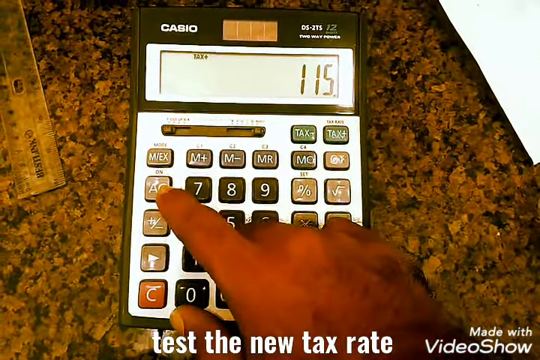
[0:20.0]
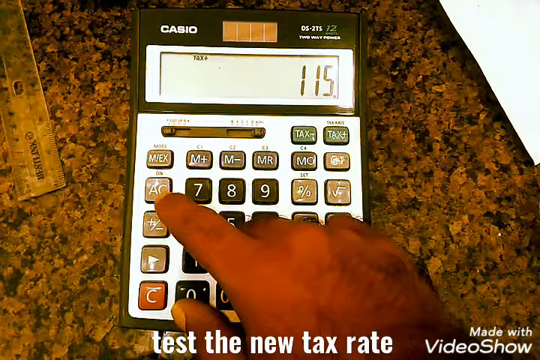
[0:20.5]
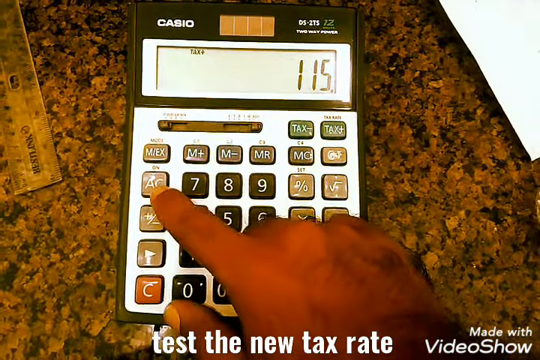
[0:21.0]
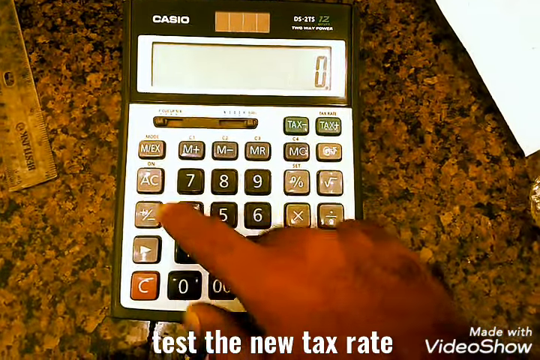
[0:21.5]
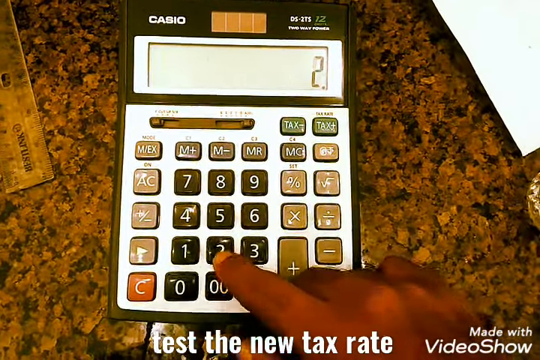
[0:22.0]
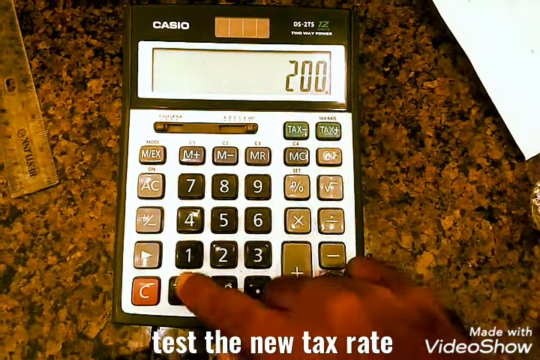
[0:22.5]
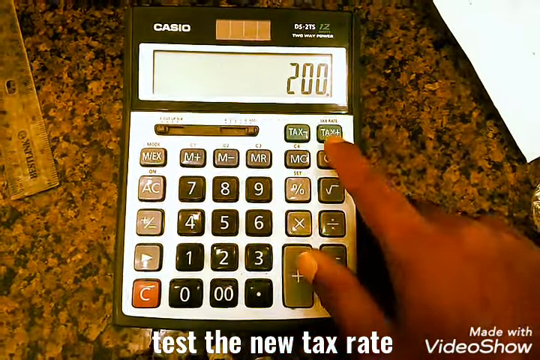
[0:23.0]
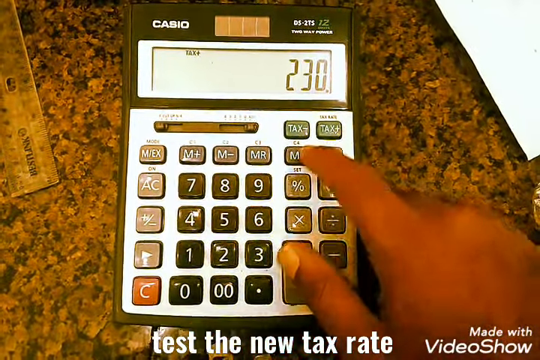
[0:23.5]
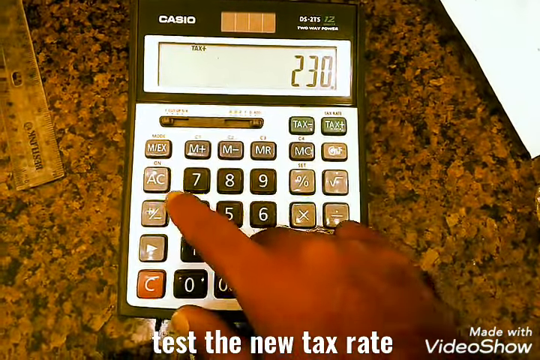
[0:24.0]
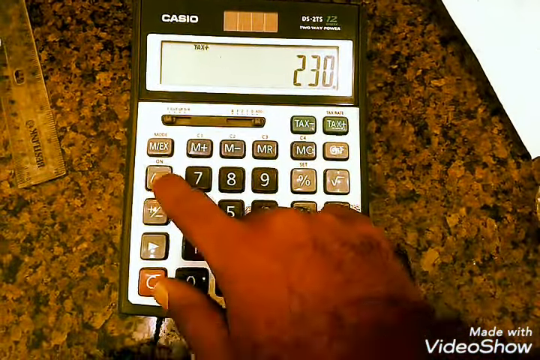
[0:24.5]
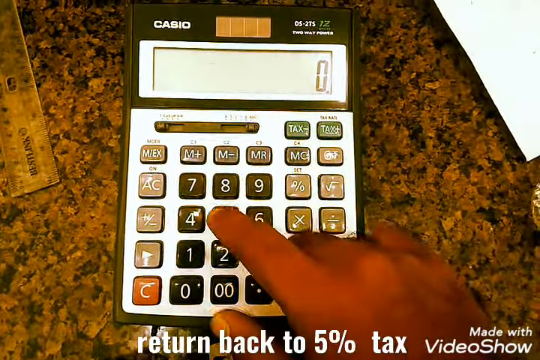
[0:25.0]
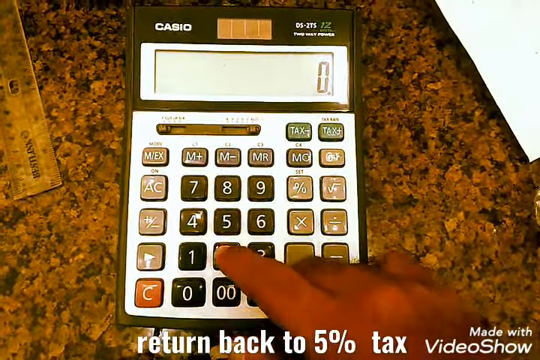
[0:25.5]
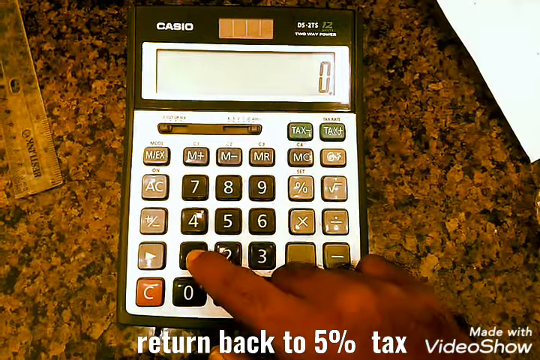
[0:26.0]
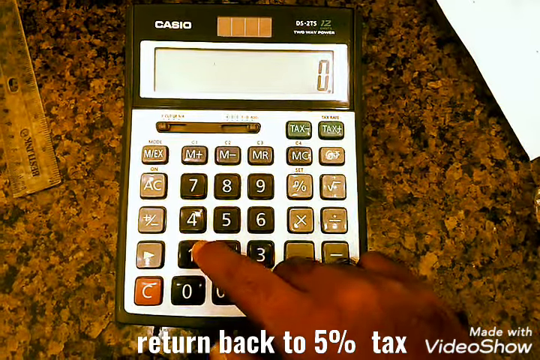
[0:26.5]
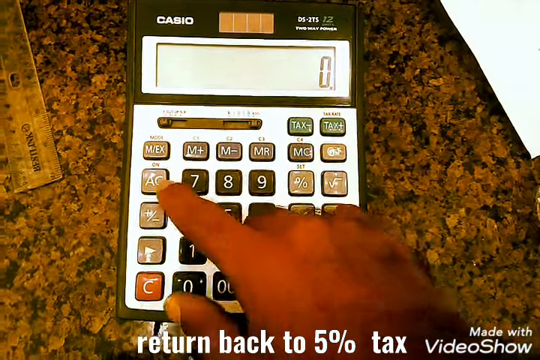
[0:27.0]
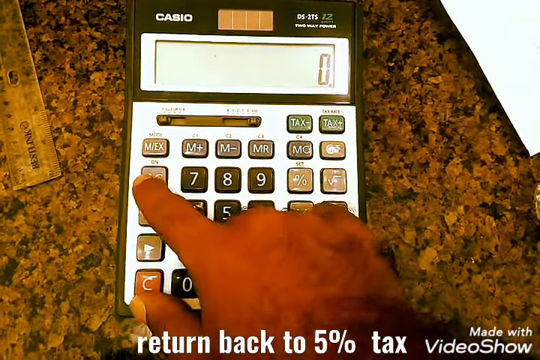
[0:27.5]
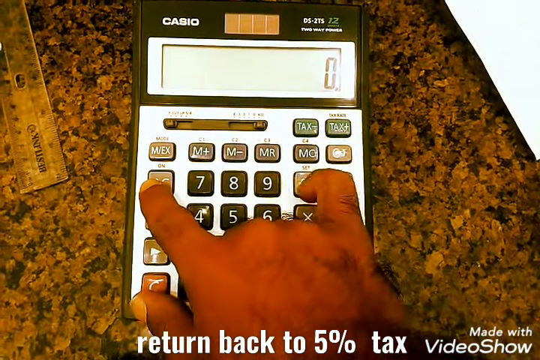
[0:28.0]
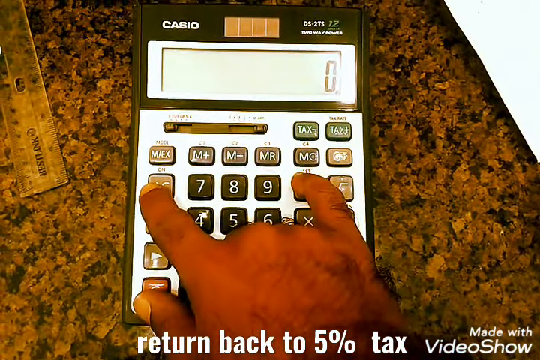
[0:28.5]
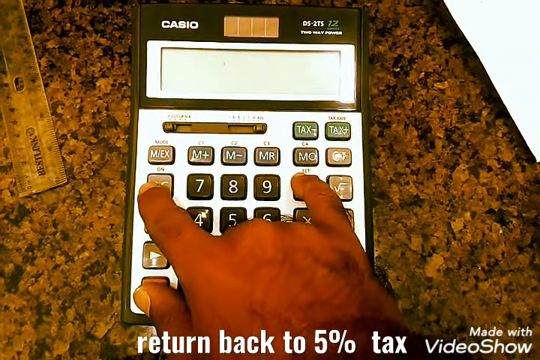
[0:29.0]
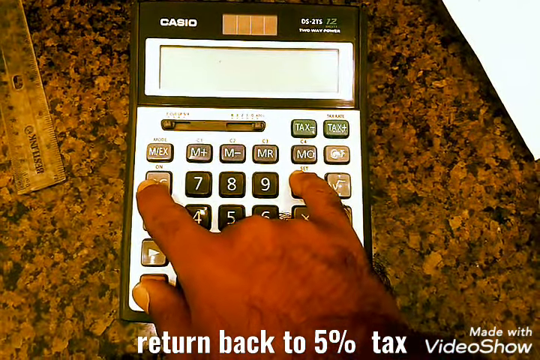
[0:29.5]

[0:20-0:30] A hand presses the AC key on a Casio calculator, with the number 115 on the display. Text at the bottom of the screen reads "test the new tax rate". The person keeps pressing buttons, then holds the AC and percentage keys, and 115 appears on the display. An indicator in the top left-hand corner of the display reads "tax". The calculator is solar-powered, with a rectangular four-panel solar box at the top next to the word "Casio", and the model "DS-2TS" is shown. The buttons are multicolored: dark brown, almost black, for the numbers, lighter brown for the function and memory keys, and an orange button with the letter C for clearing.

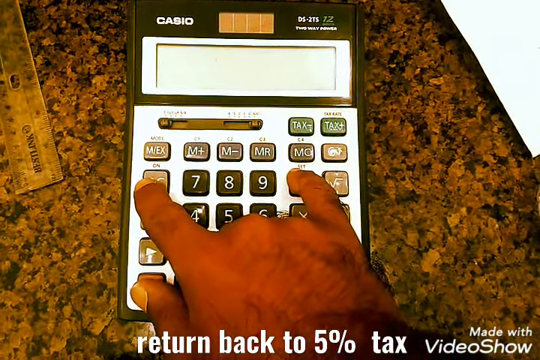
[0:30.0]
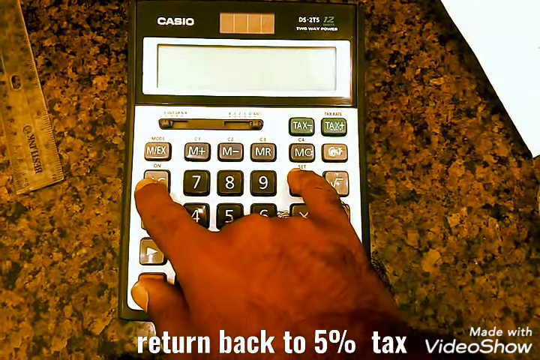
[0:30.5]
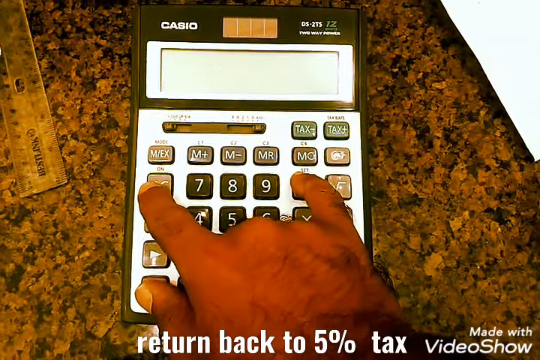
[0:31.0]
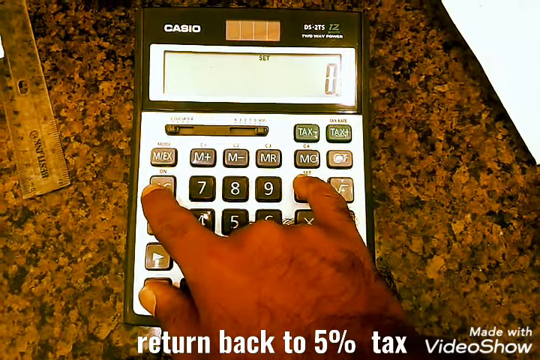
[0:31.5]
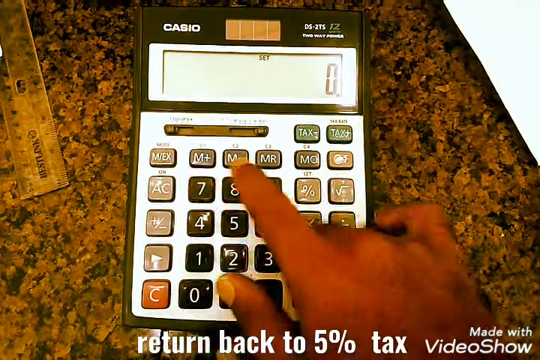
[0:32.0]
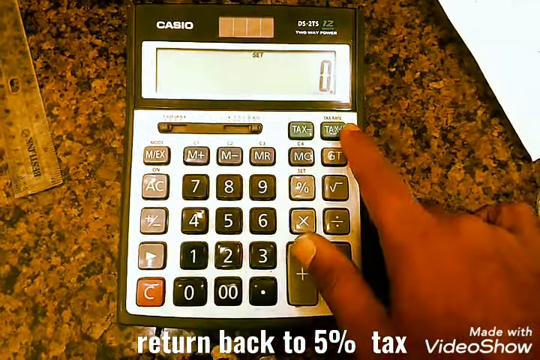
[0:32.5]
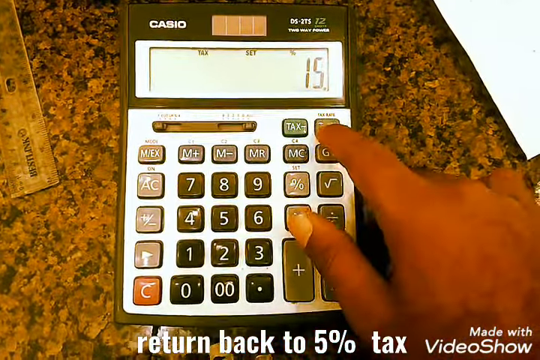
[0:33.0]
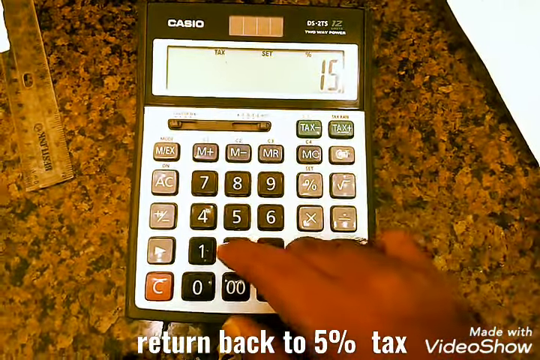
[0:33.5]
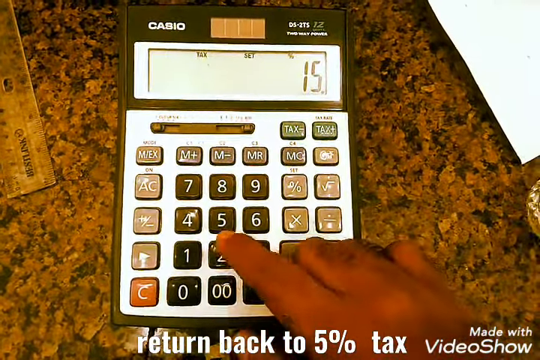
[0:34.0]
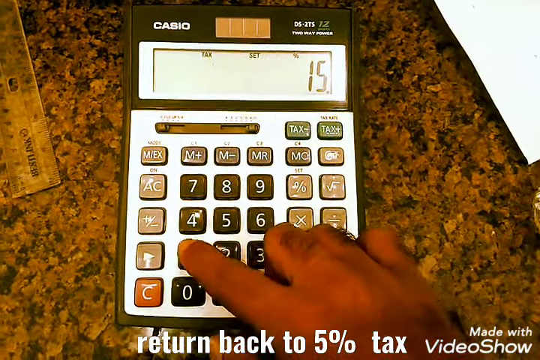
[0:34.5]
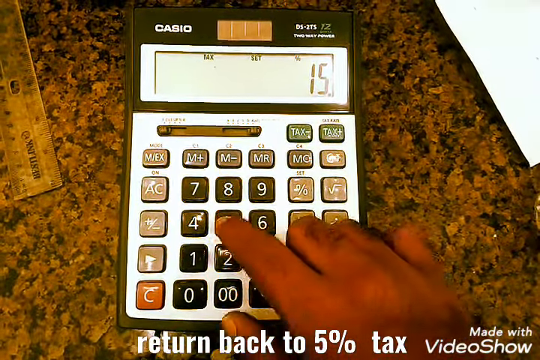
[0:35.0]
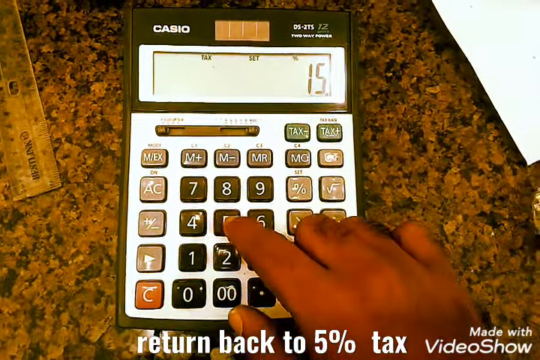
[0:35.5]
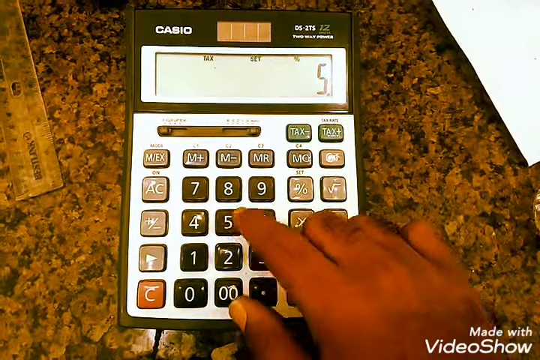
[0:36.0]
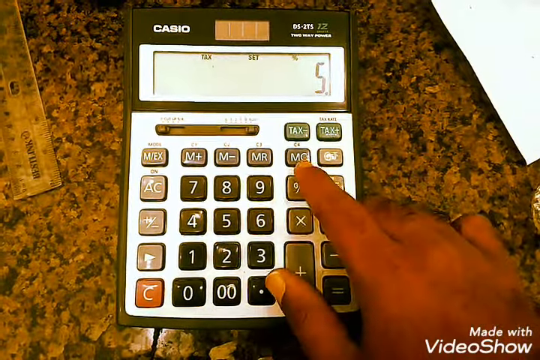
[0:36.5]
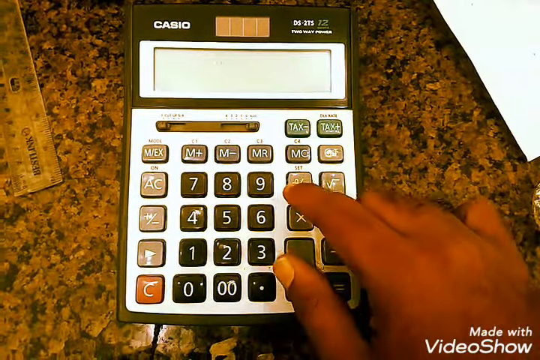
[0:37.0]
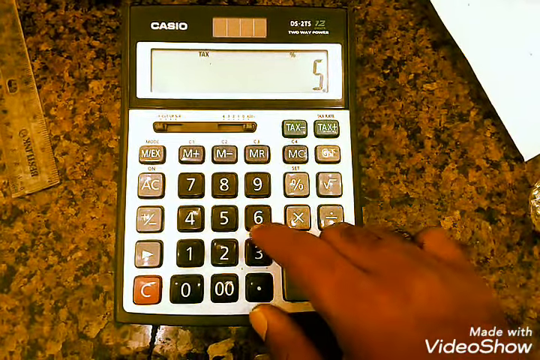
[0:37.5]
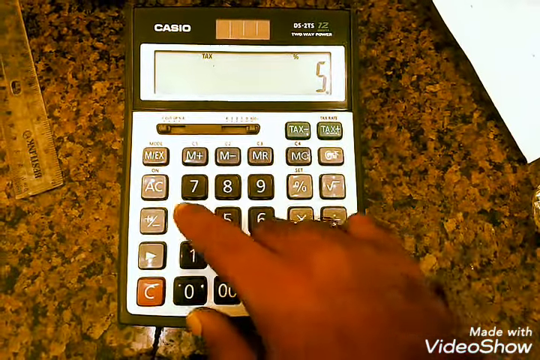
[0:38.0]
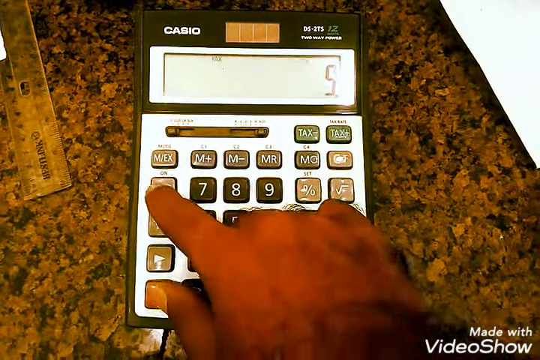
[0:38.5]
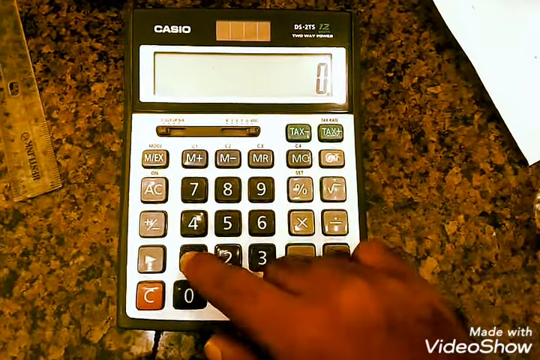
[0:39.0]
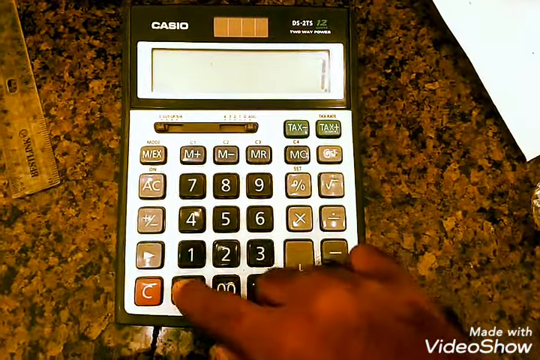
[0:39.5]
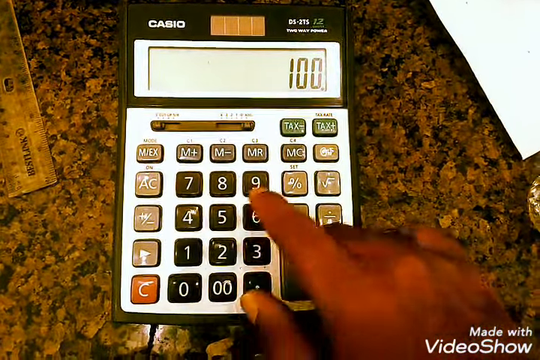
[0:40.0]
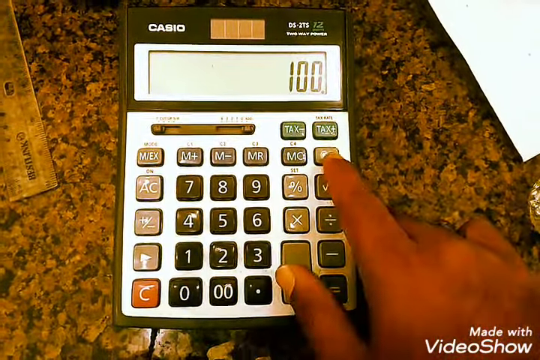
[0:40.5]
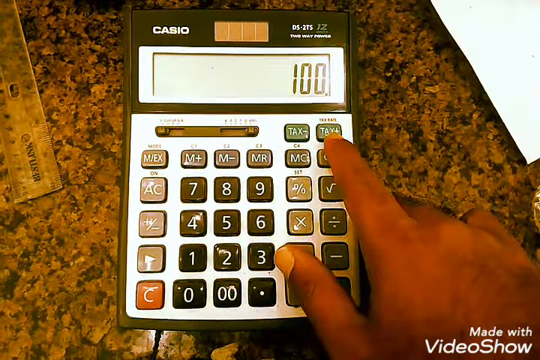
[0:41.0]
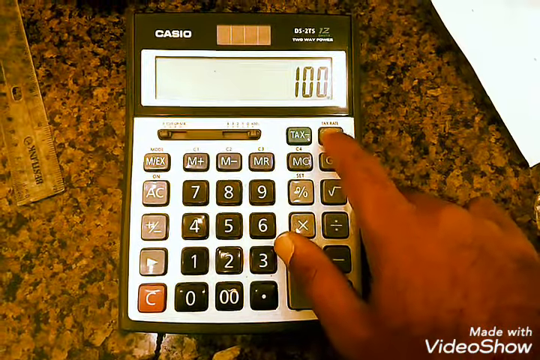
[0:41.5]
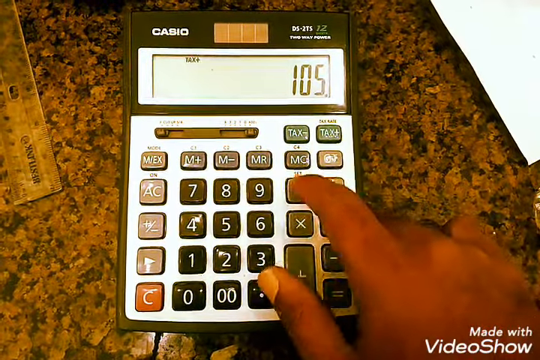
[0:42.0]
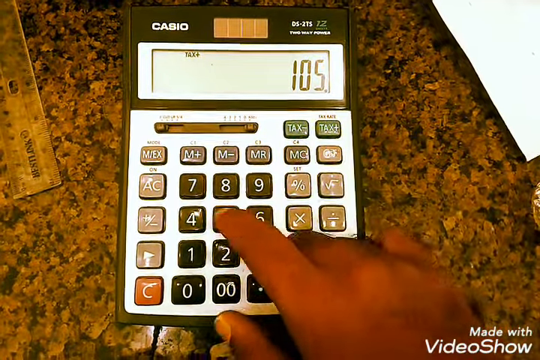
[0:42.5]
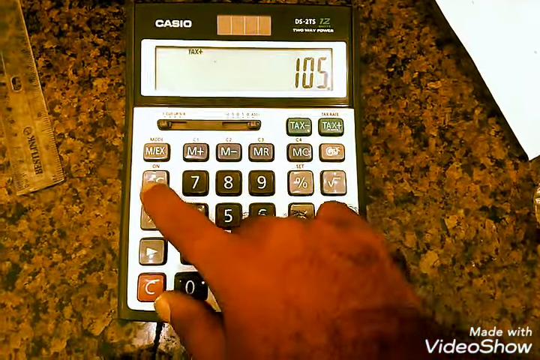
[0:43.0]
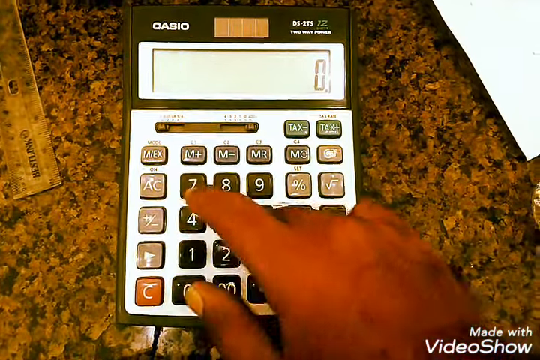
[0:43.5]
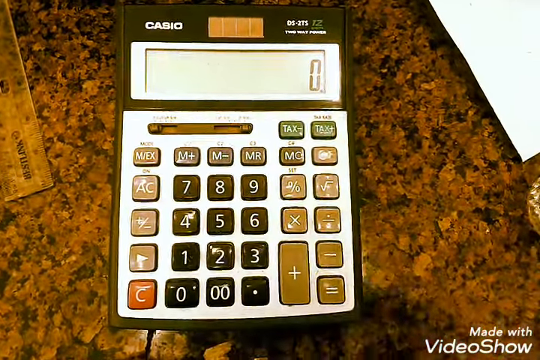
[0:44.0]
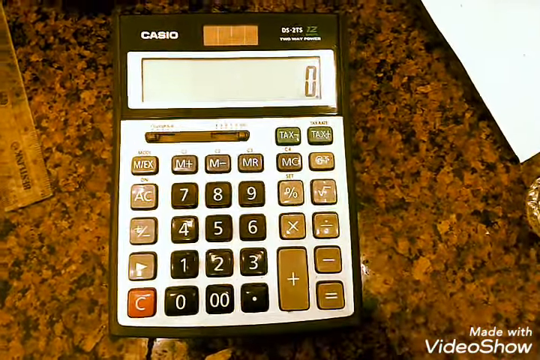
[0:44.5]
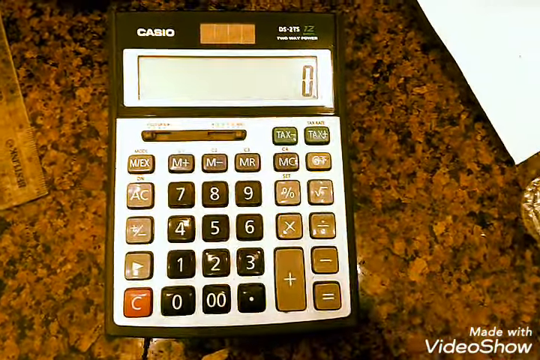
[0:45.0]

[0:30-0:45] The person places their pointer finger and pinky finger on the AC and percentage keys, which are used to set the tax rate. Text at the bottom of the screen reads "return back to 5% tax", with step-by-step directions for doing so. The person presses the number 5 and then enters 100 and 105. The display and the solar panels above it are visible on the Casio calculator, model DS-2TS, with buttons in various shades of brown and black for the numbers and functions and an orange clear button with the letter C in the bottom left-hand corner. The video is instructional, with someone, apparently a tax expert, showing the viewer how to calculate taxes using a standard calculator.